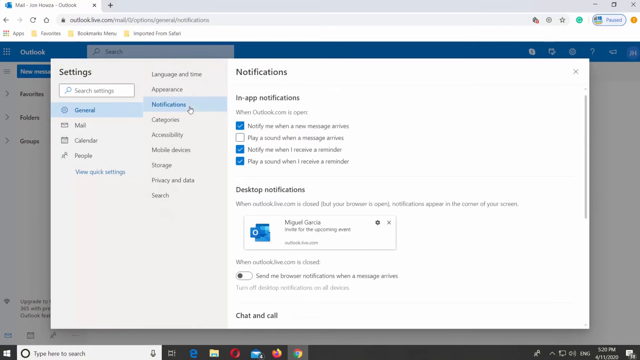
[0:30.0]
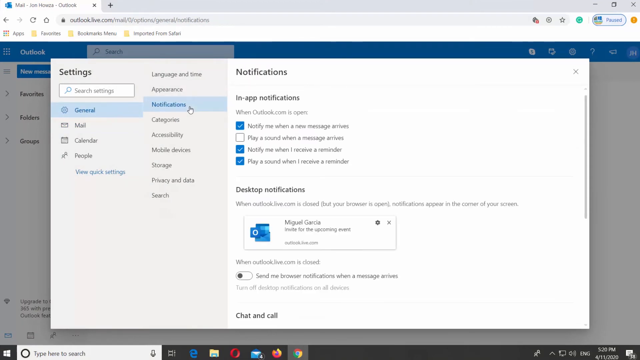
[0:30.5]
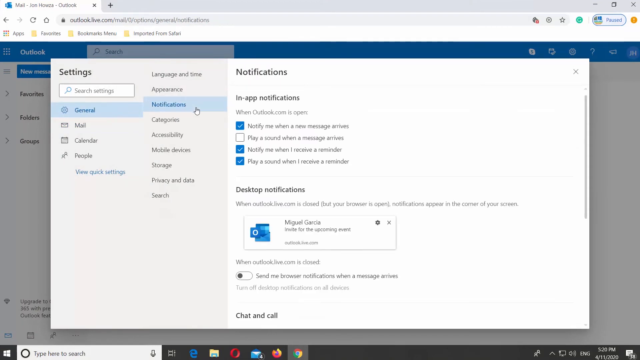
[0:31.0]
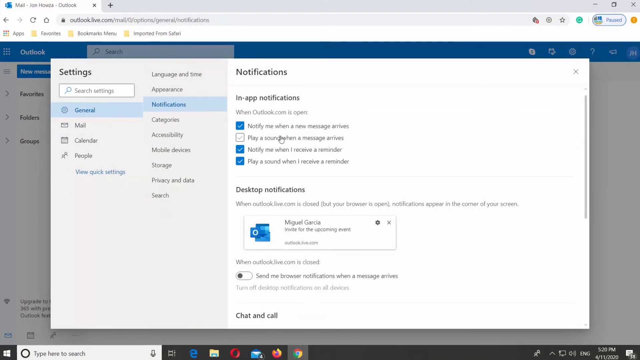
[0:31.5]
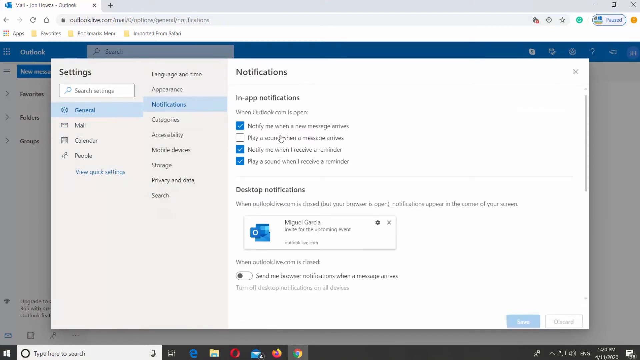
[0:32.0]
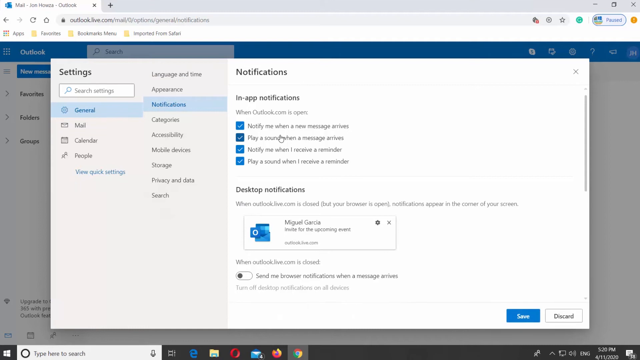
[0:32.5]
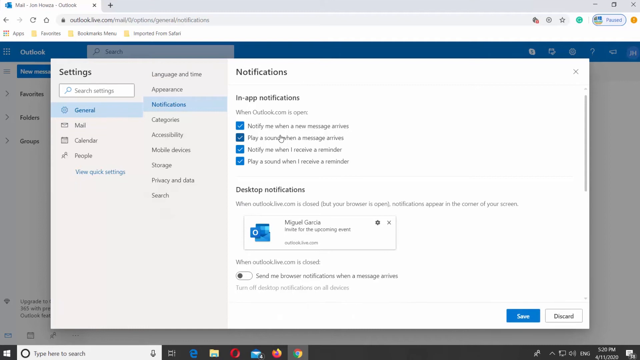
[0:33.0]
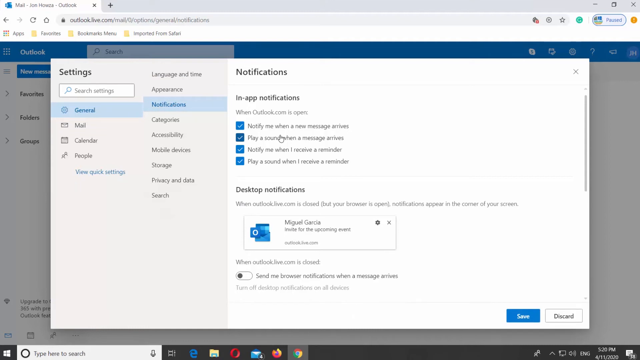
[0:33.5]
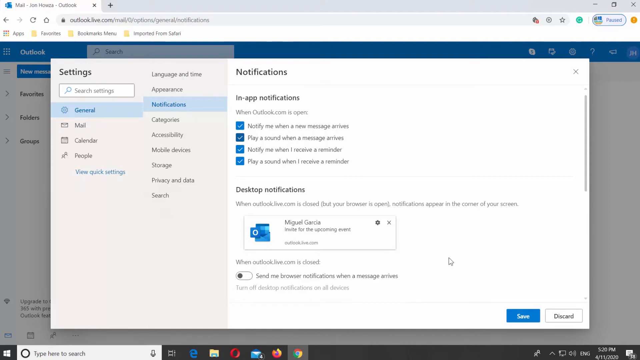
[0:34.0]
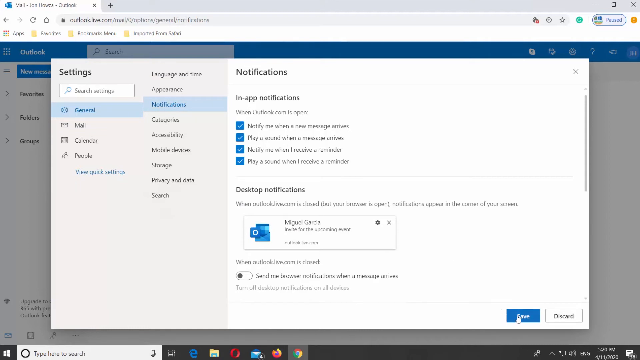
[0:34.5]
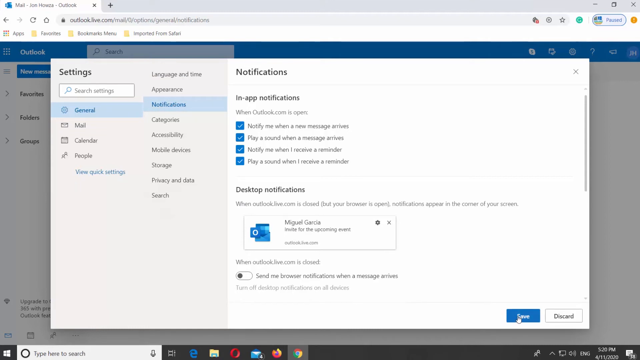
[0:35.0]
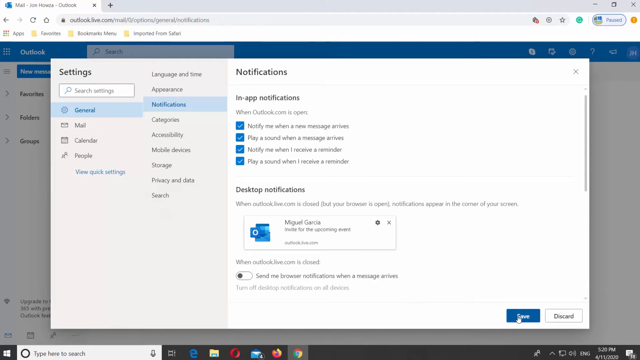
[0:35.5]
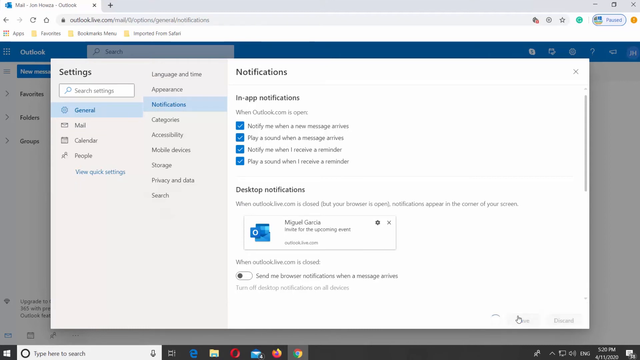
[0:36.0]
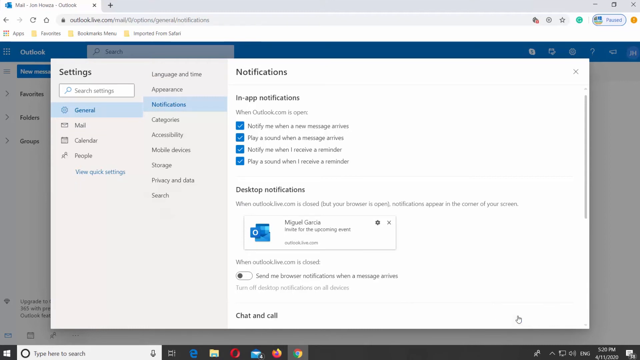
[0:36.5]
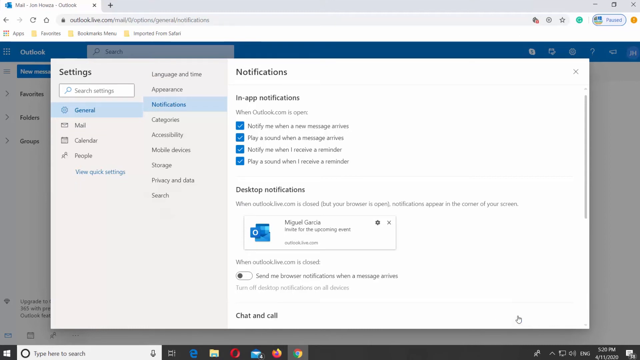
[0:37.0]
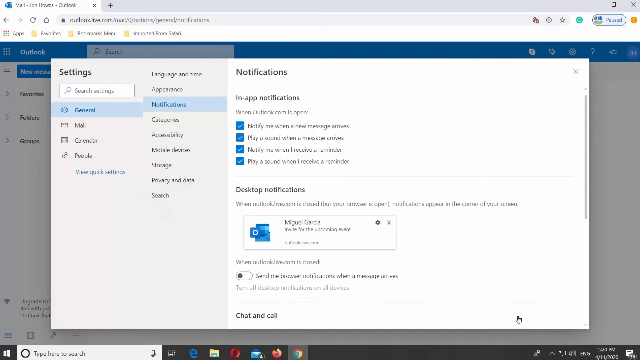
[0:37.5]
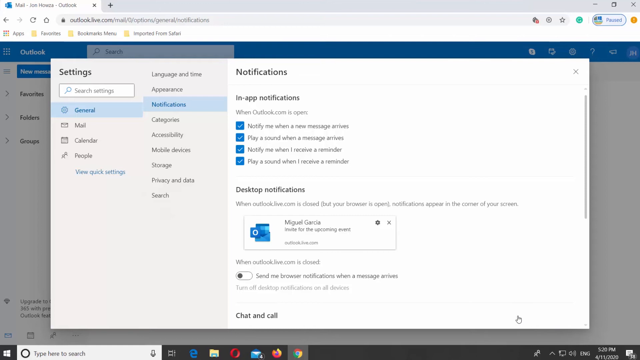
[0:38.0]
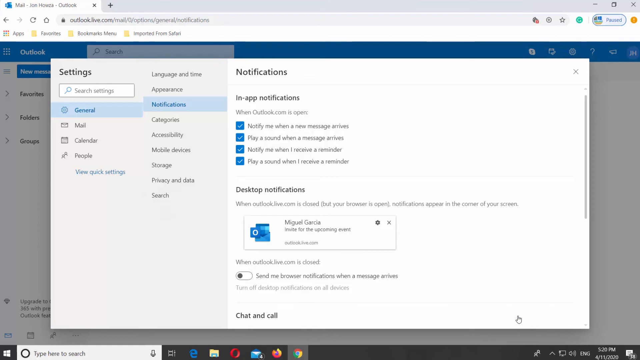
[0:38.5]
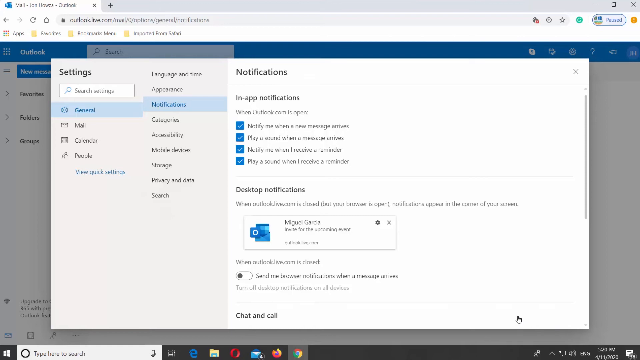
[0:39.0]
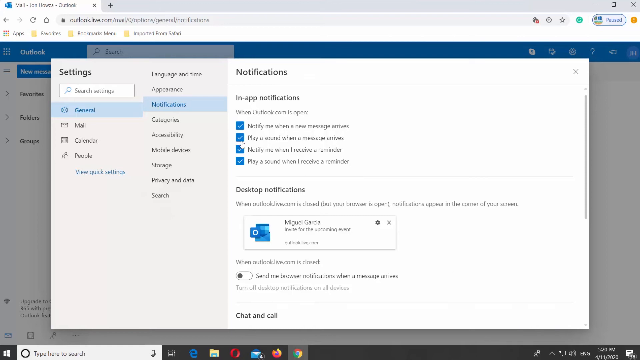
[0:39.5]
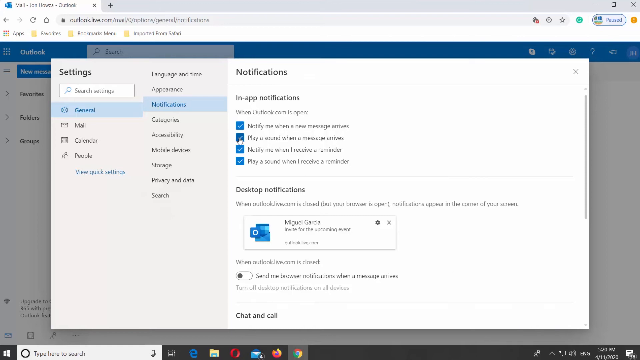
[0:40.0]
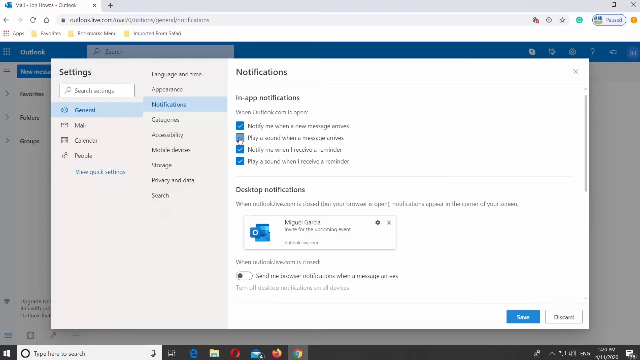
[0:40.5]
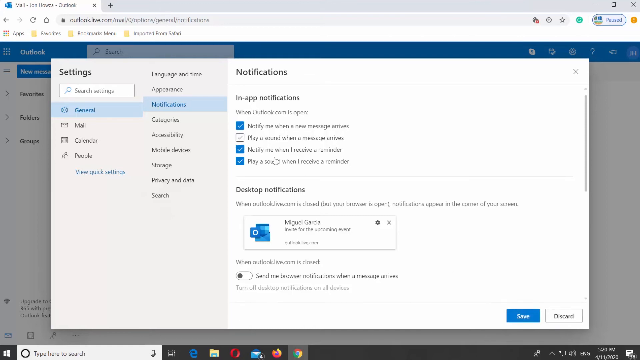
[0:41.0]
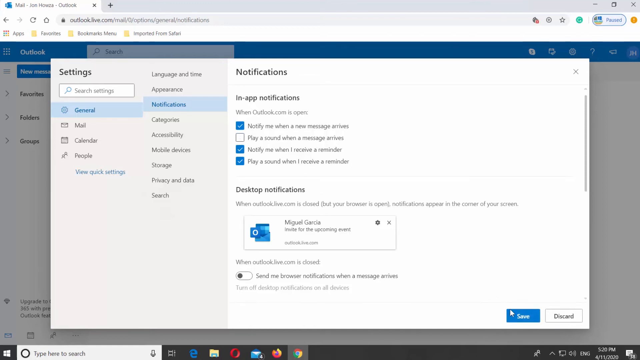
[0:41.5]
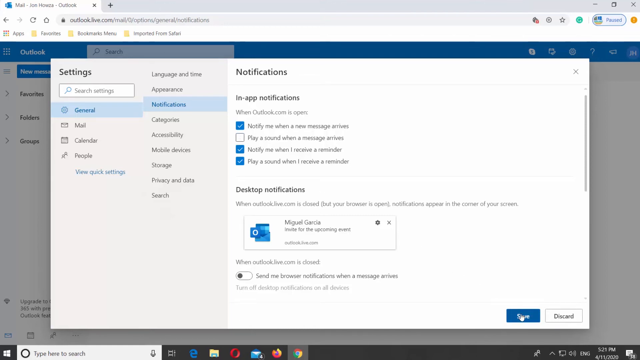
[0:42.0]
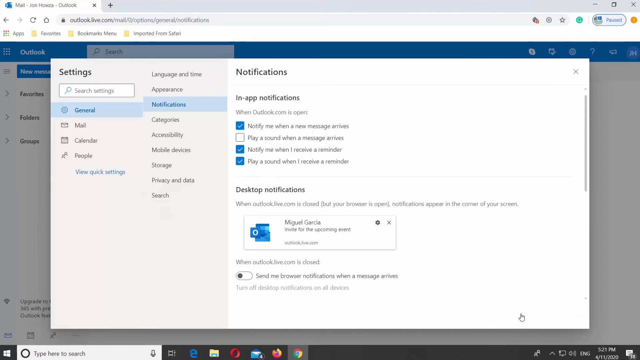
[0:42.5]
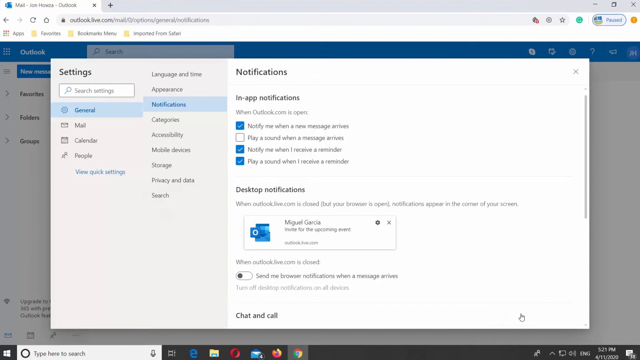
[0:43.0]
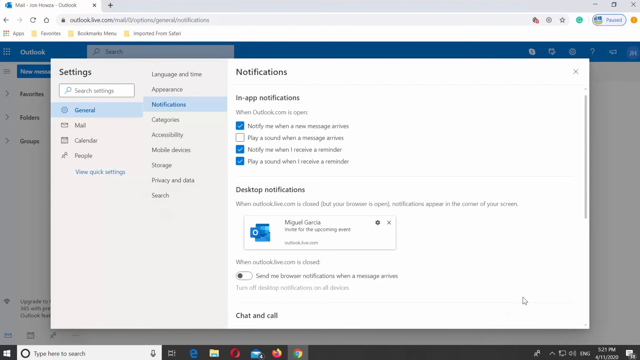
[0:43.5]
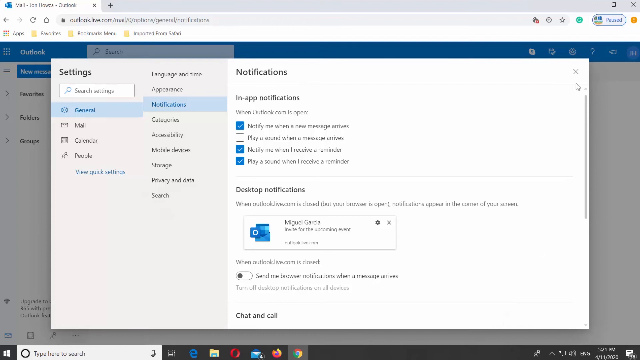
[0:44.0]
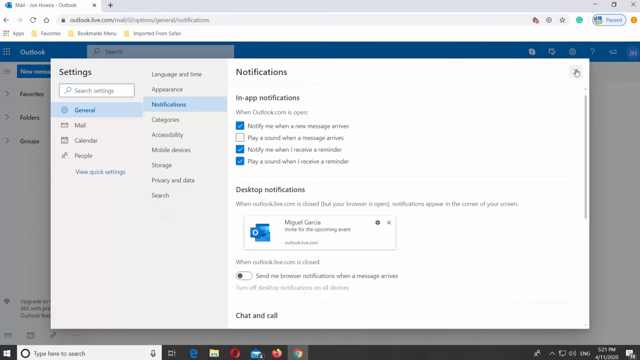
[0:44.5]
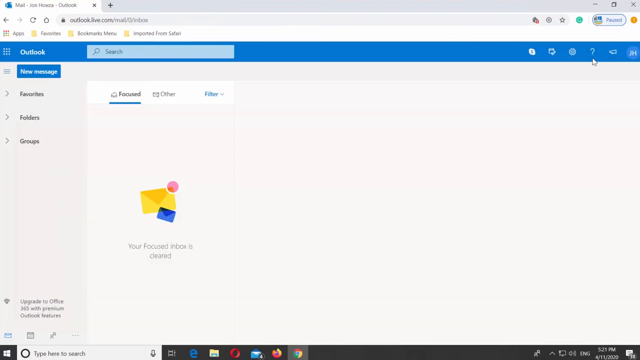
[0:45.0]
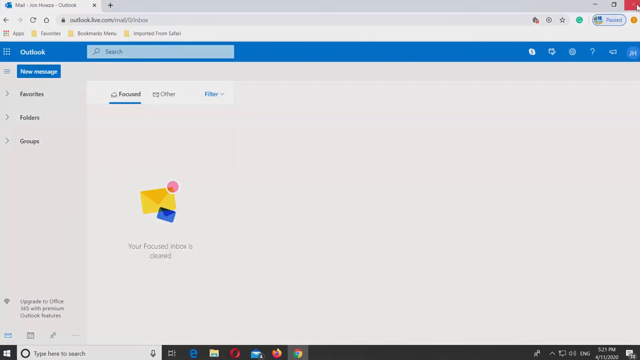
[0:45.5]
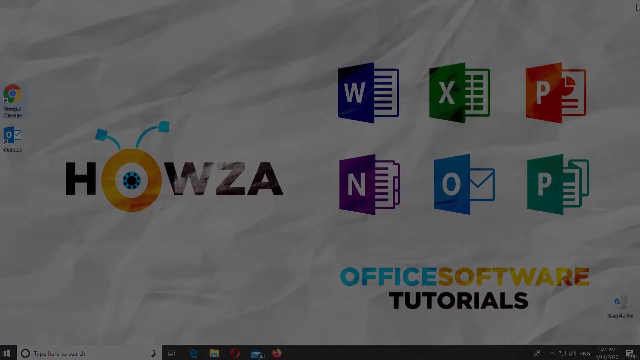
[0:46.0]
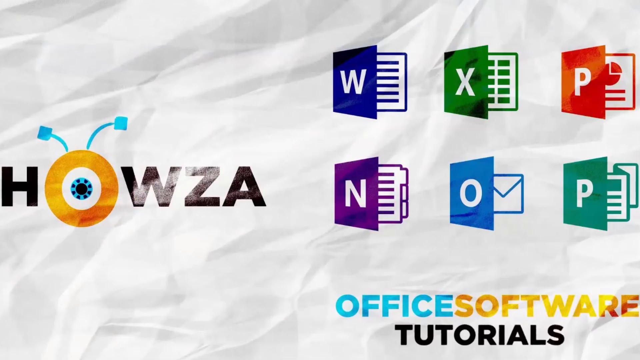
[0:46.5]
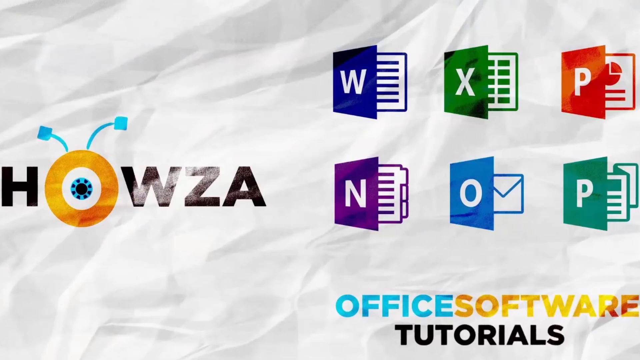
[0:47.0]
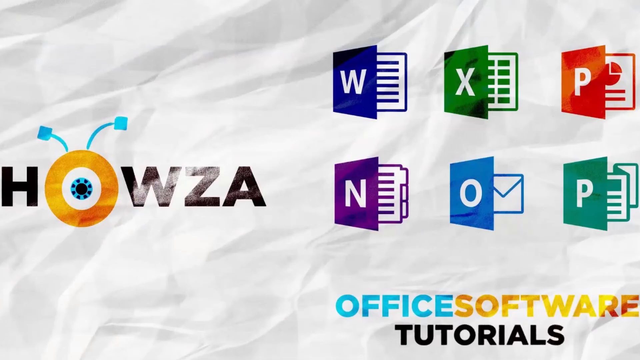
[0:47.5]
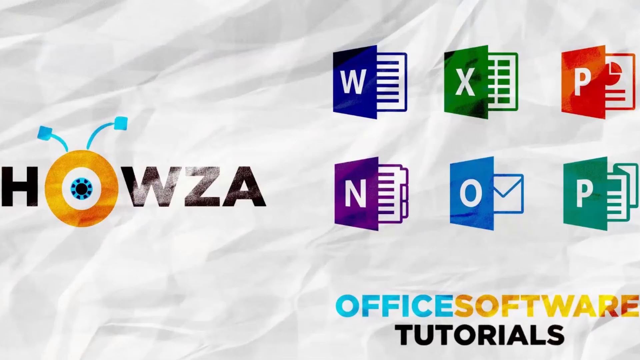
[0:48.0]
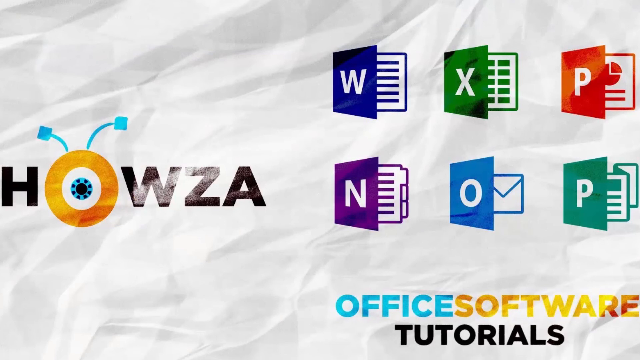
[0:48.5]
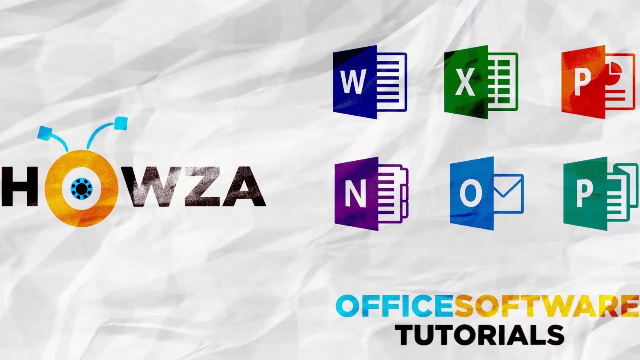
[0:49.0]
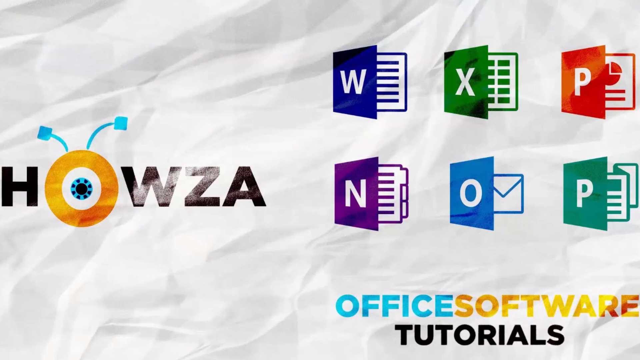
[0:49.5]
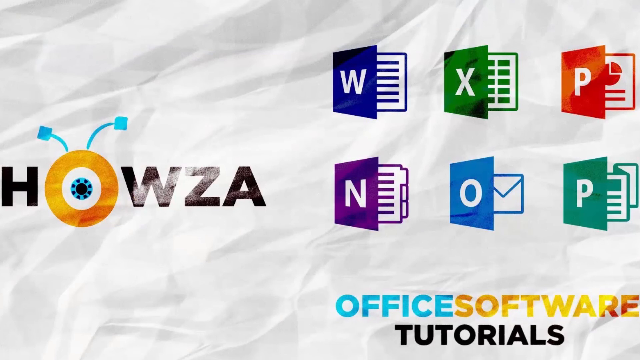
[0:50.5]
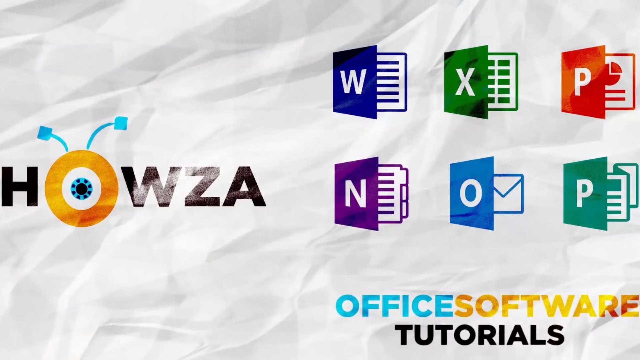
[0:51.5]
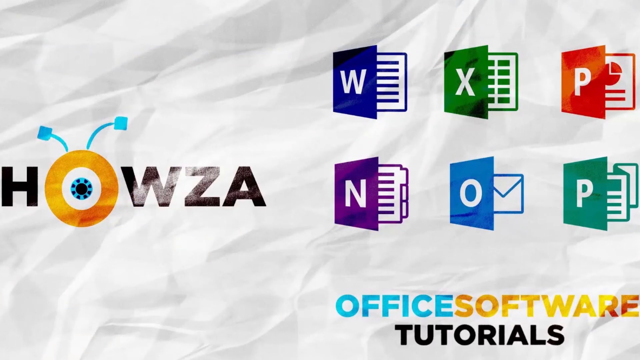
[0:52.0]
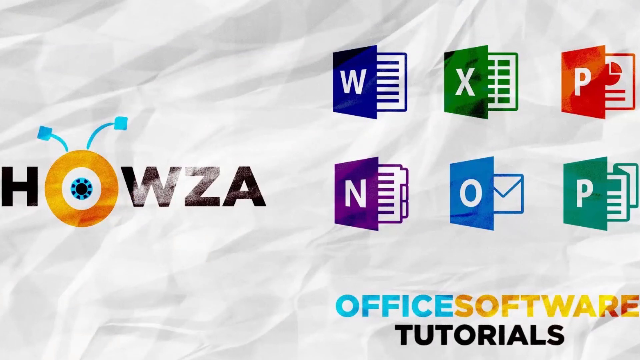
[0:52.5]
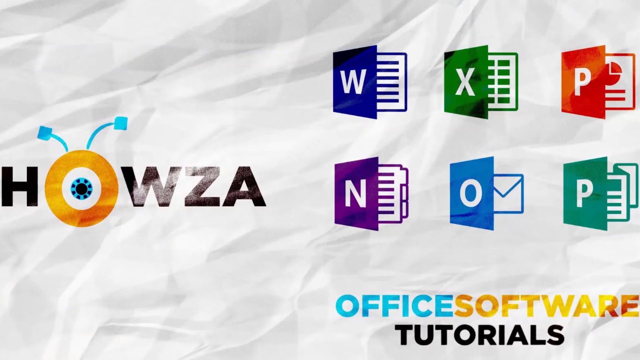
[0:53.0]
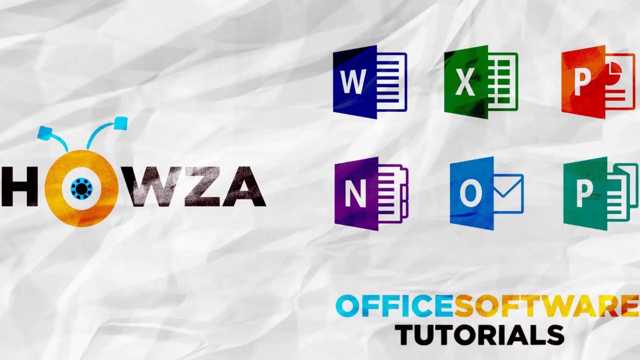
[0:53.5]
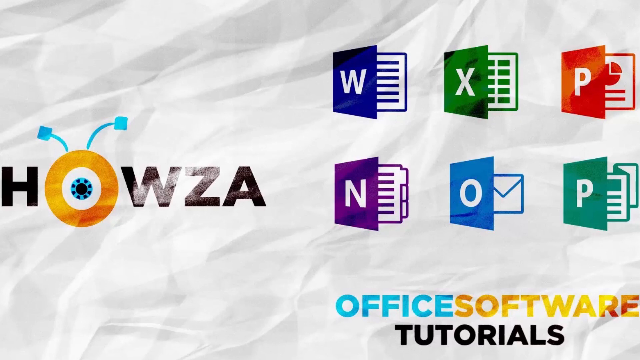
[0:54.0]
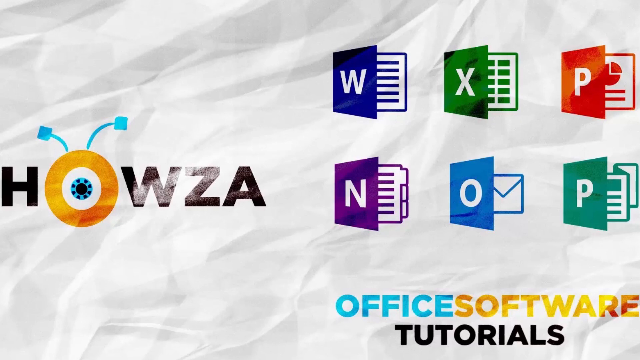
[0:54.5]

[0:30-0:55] The notifications section in Outlook remains open. The cursor hovers over the notifications option to play a sound when a message arrives, then clicks and unclicks it. The cursor then moves to the top right corner of the screen to close the Outlook application. This returns to the home screen, where the white paper-like background is seen again along with the Hauser logo and the different Microsoft features such as Word, Excel, PowerPoint, and Outlook. Among them are a purple N and a teal P.